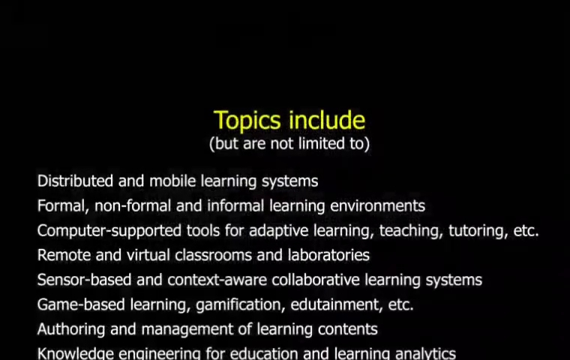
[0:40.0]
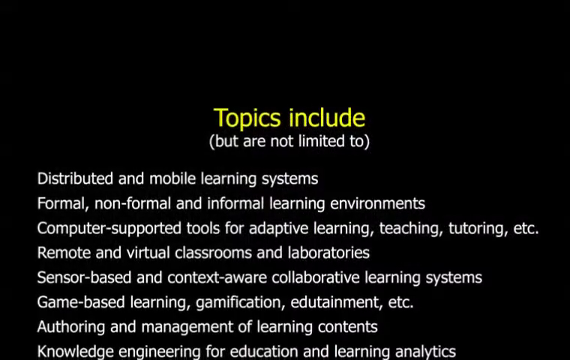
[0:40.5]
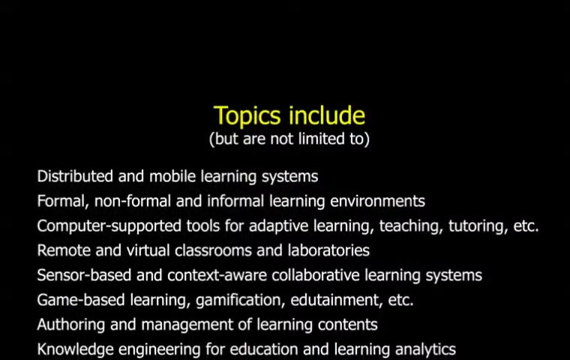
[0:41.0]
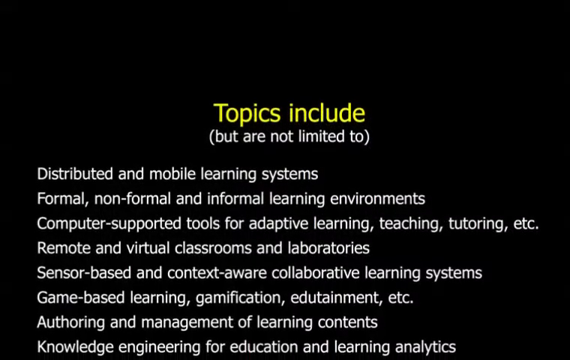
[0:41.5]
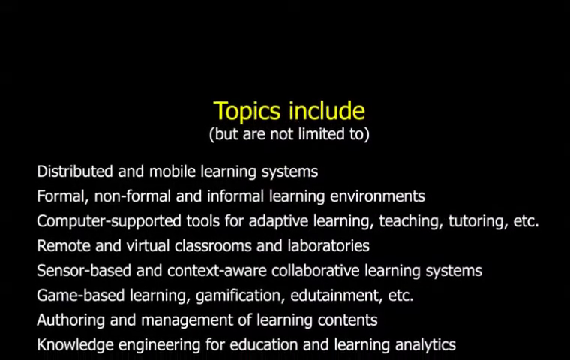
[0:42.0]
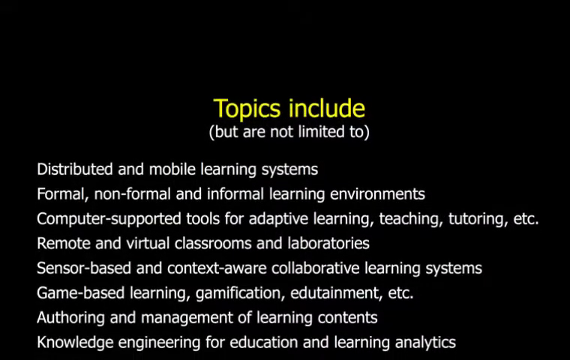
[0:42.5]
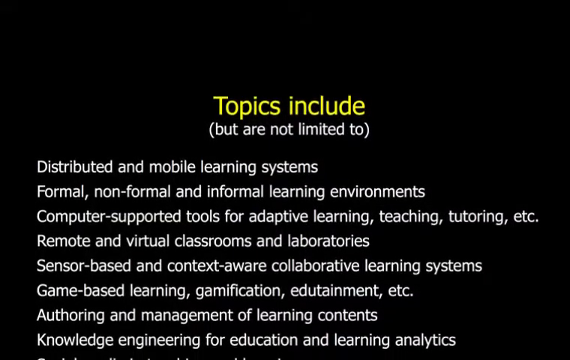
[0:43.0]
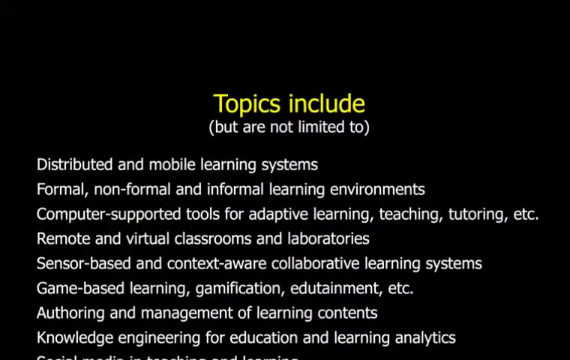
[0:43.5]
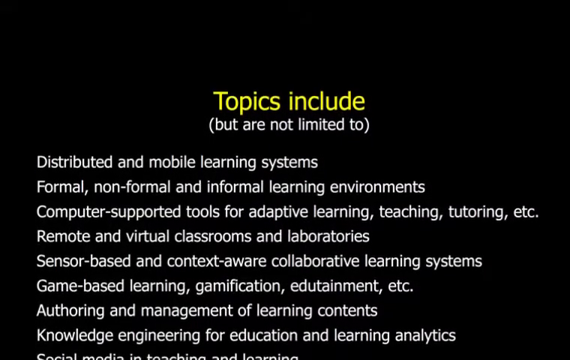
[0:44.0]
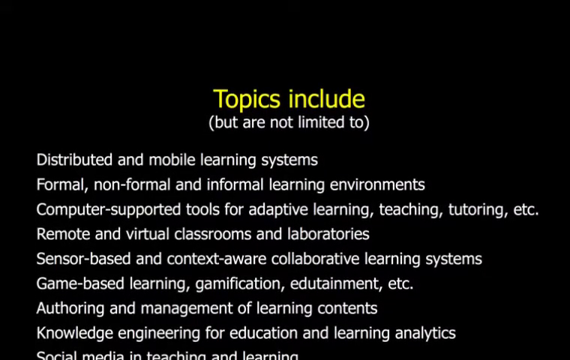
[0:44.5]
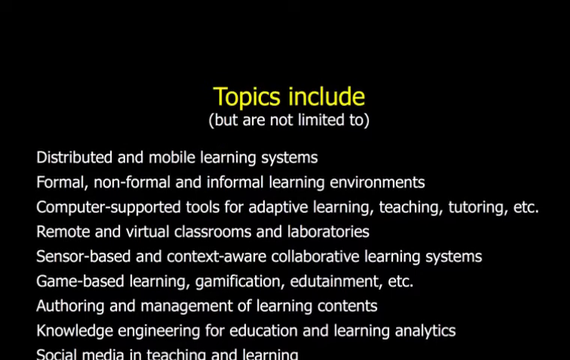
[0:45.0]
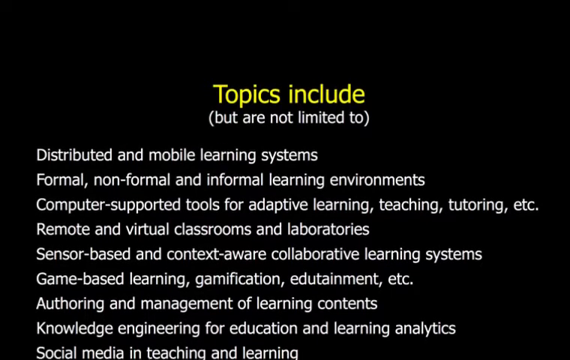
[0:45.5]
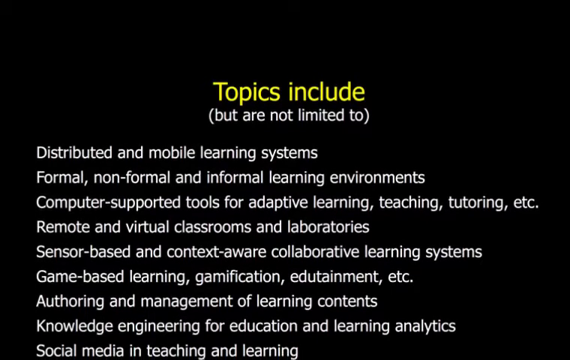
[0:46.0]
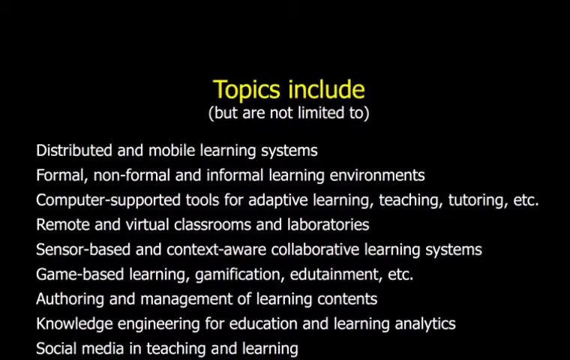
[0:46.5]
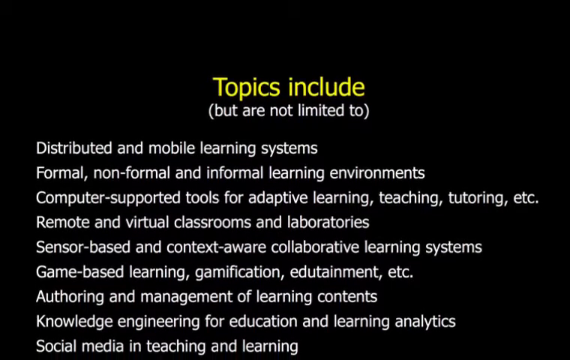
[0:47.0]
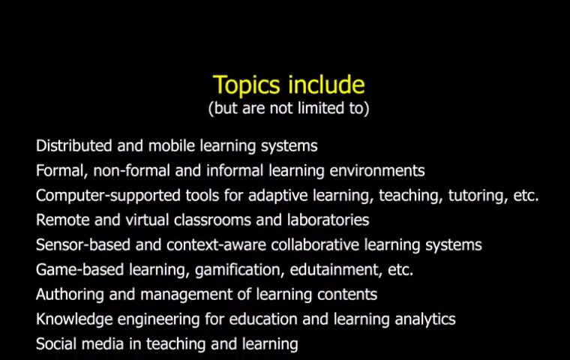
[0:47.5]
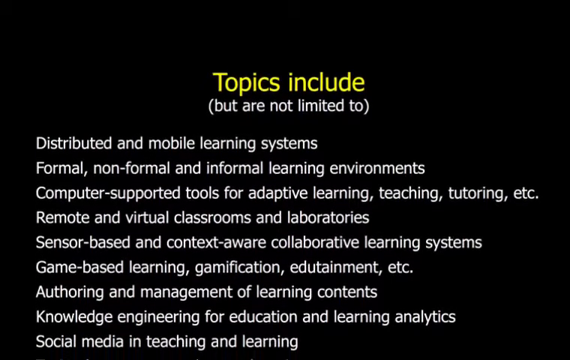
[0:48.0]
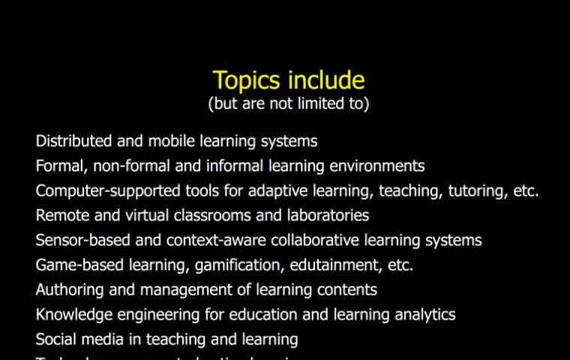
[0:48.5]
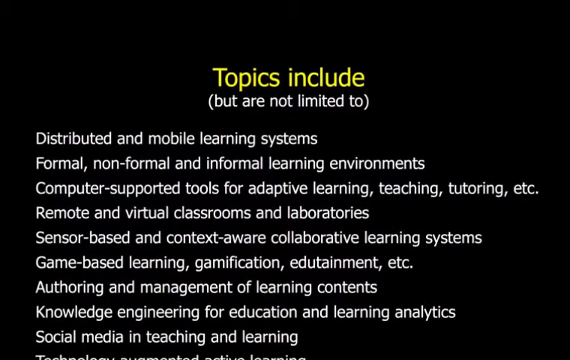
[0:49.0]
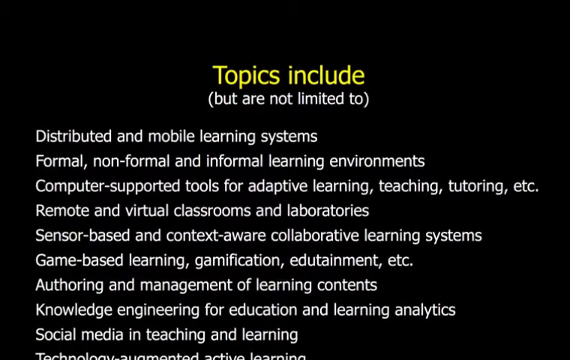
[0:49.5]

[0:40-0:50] Text appears on screen listing topics that are not limited to those written below. The list reads "distributed and mobile learning systems, formal, non-formal and informal learning environments, computer-supported tools for adaptive learning, teaching, tutoring", "remote and virtual classrooms and laboratories, sensor-based and context-aware collaborative learning systems, game-based learning, gamification, edutainment", "authoring and management of learning contents, knowledge engineering". The words scroll upward as they are shown.